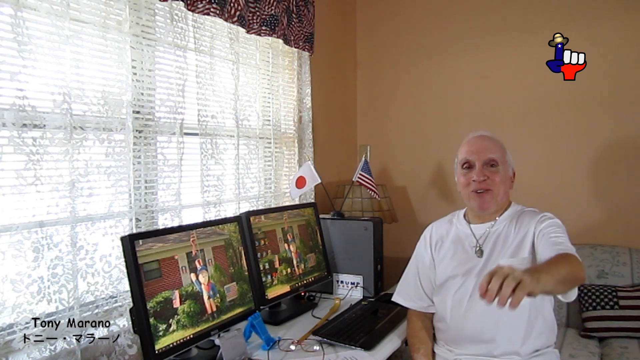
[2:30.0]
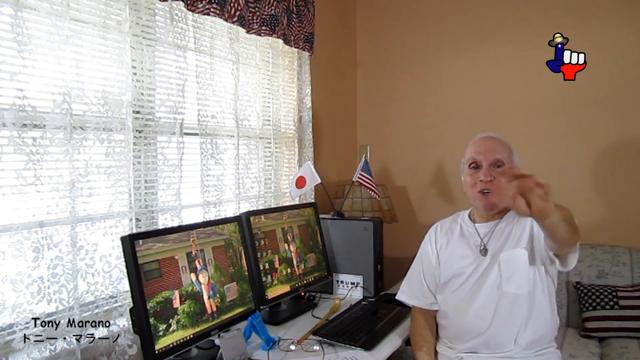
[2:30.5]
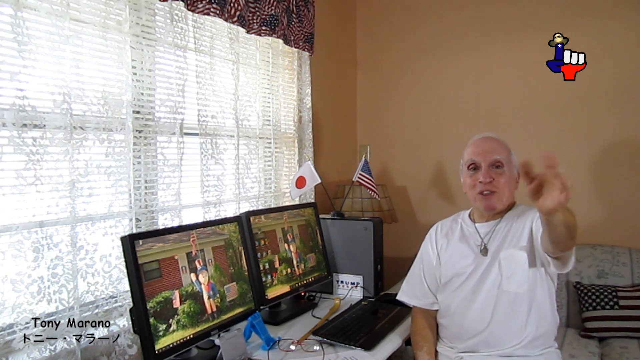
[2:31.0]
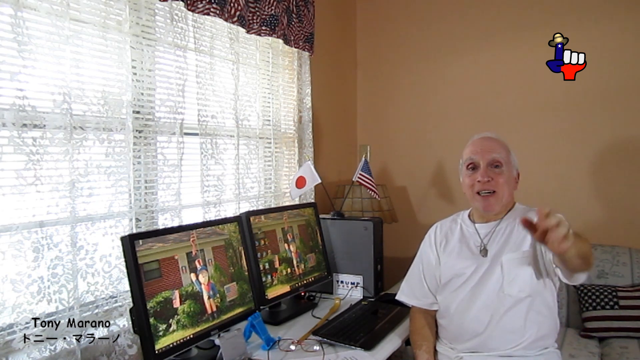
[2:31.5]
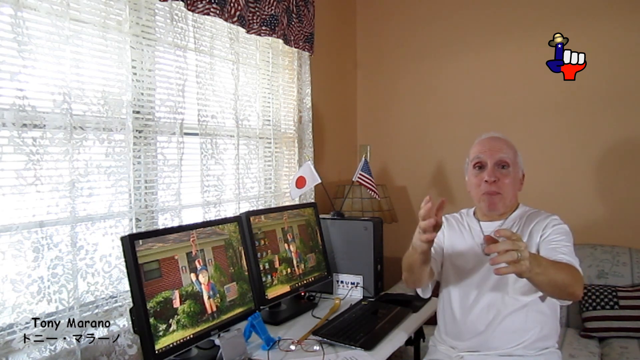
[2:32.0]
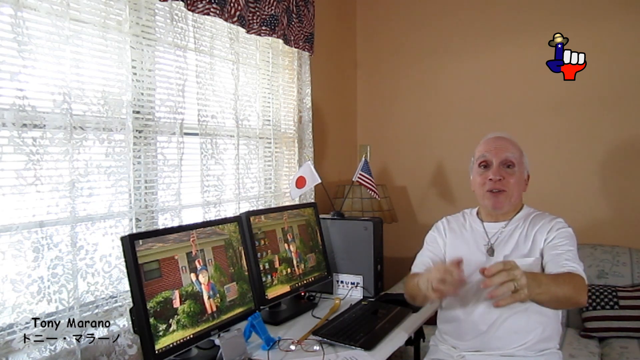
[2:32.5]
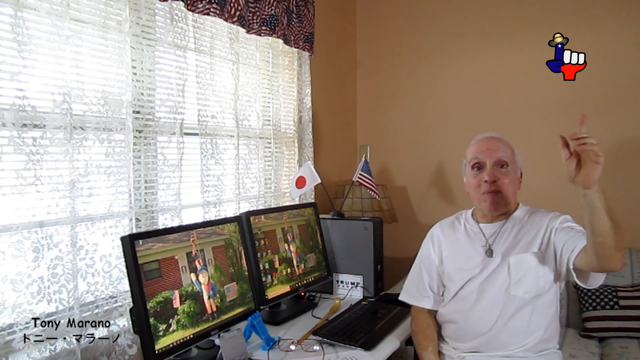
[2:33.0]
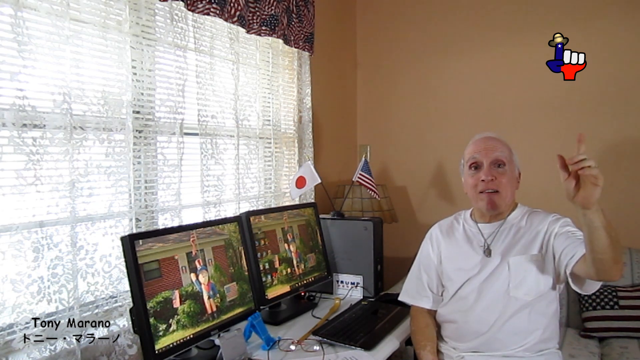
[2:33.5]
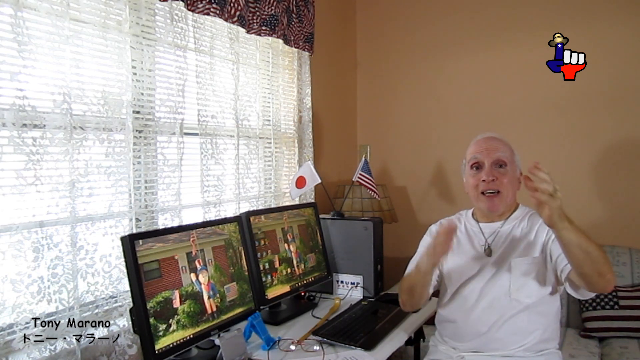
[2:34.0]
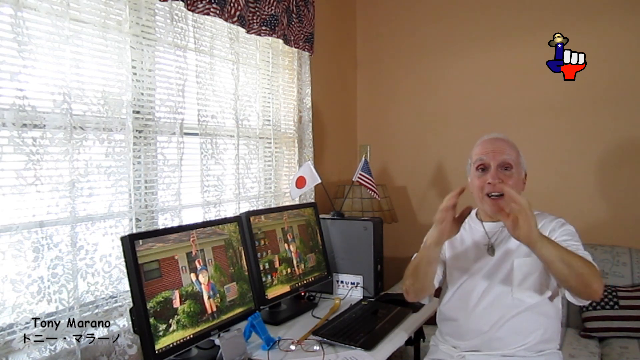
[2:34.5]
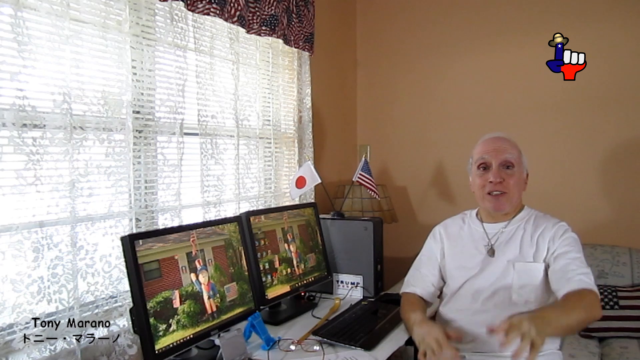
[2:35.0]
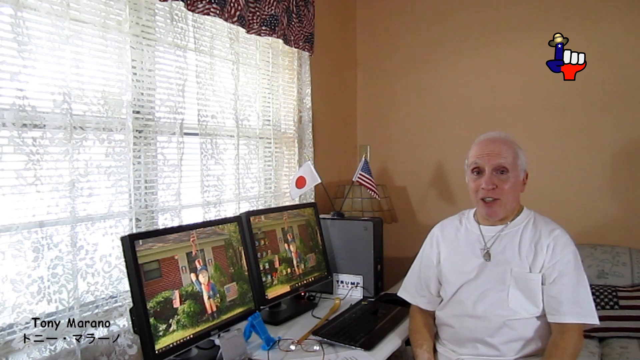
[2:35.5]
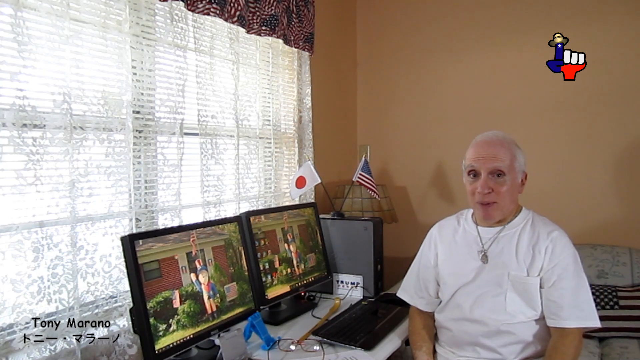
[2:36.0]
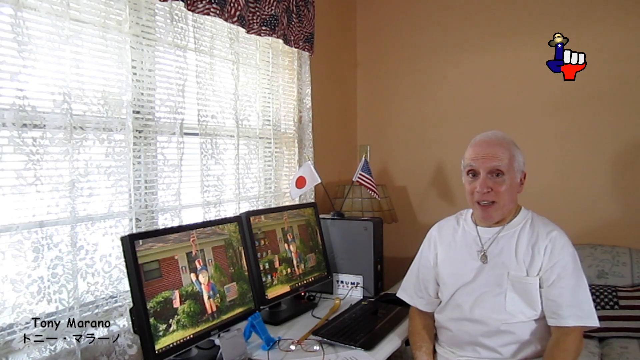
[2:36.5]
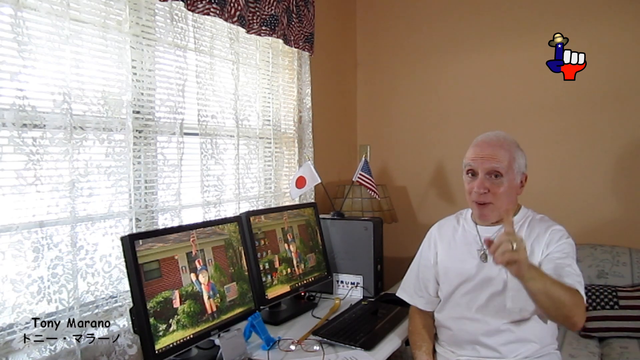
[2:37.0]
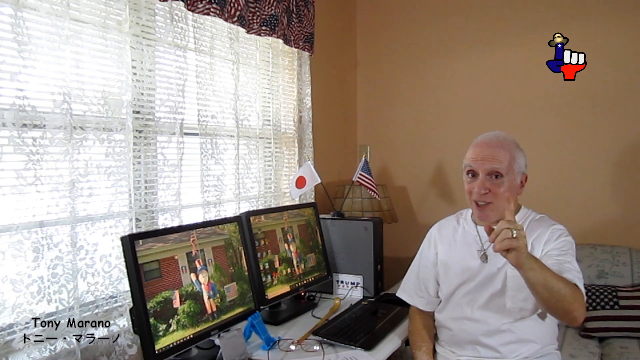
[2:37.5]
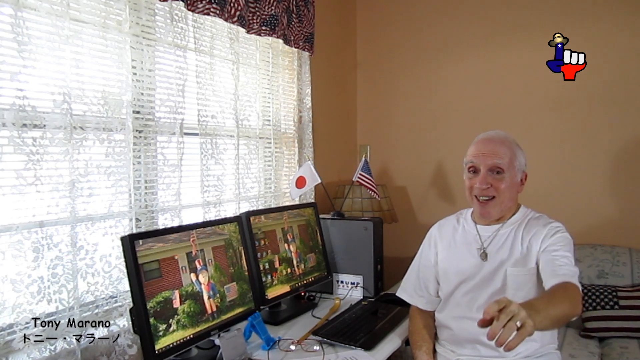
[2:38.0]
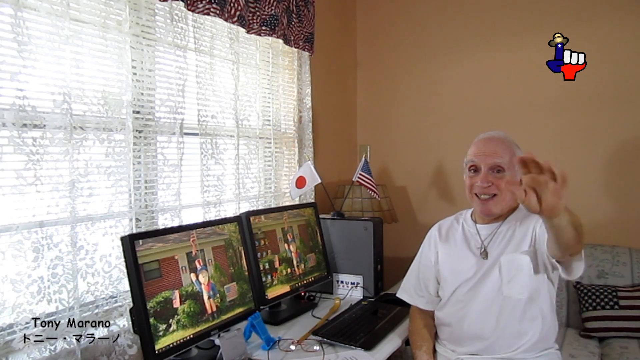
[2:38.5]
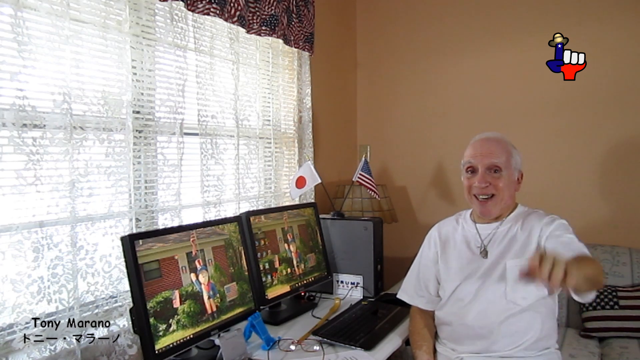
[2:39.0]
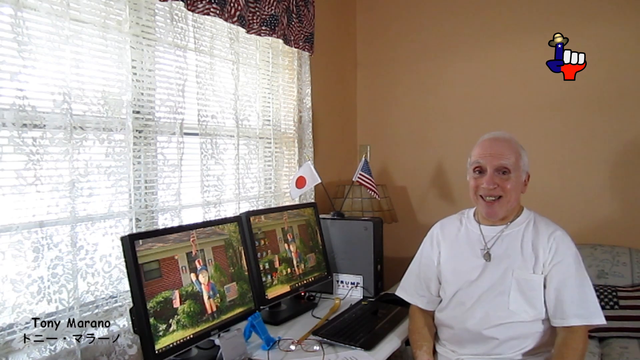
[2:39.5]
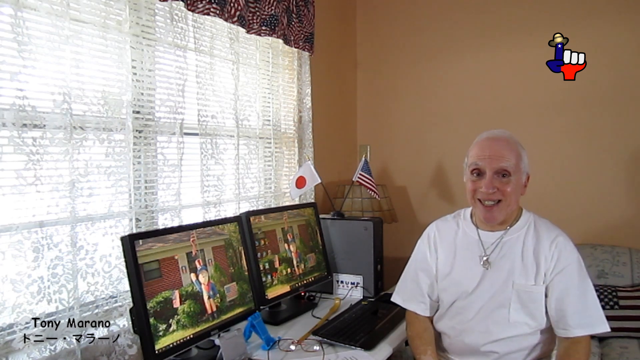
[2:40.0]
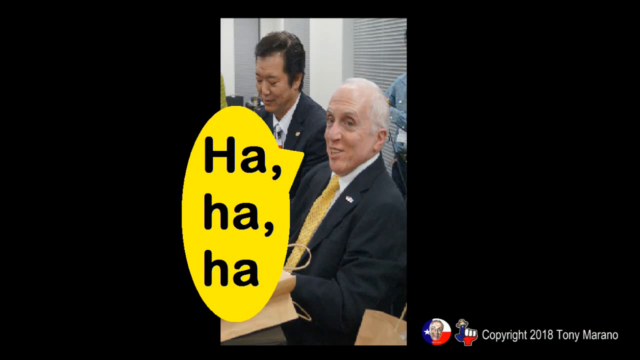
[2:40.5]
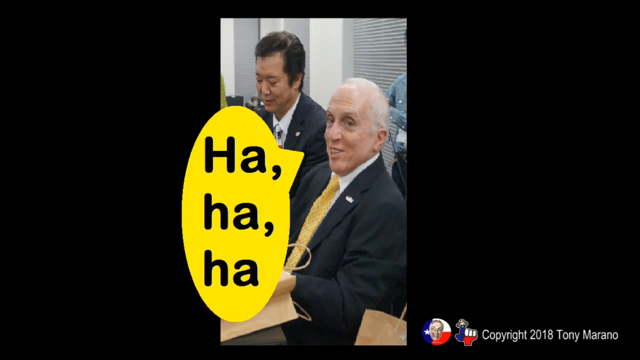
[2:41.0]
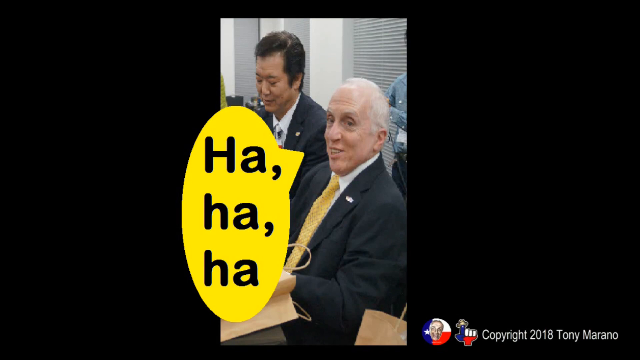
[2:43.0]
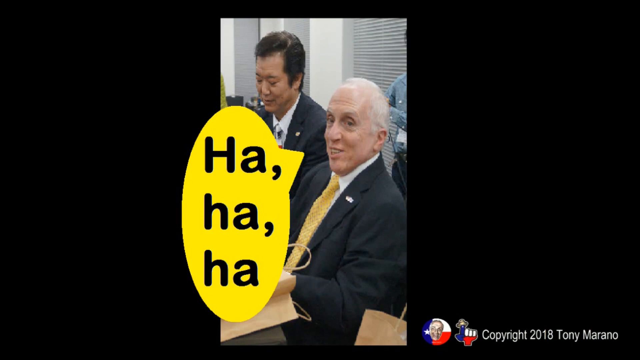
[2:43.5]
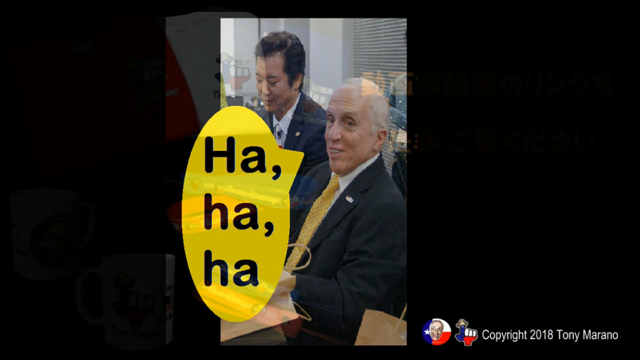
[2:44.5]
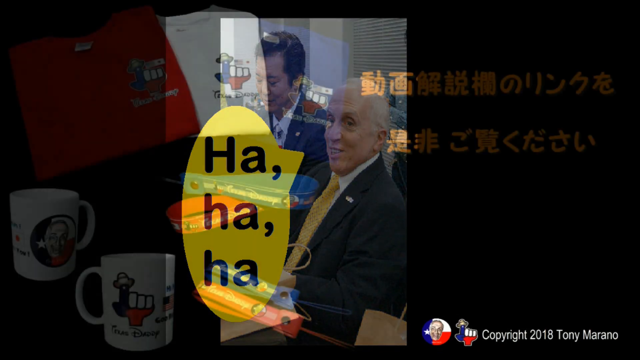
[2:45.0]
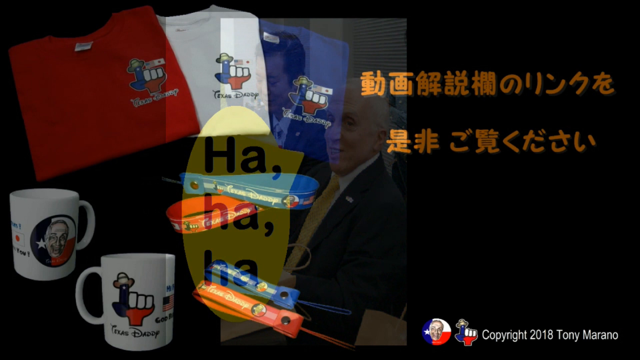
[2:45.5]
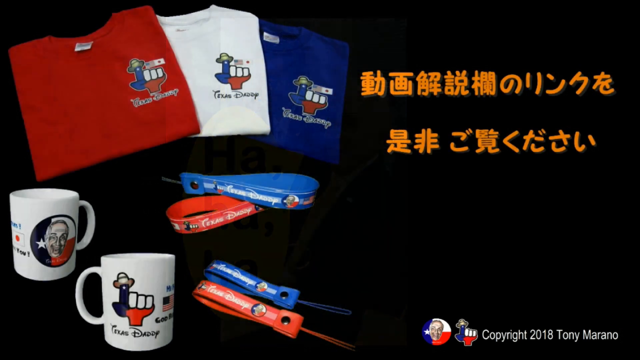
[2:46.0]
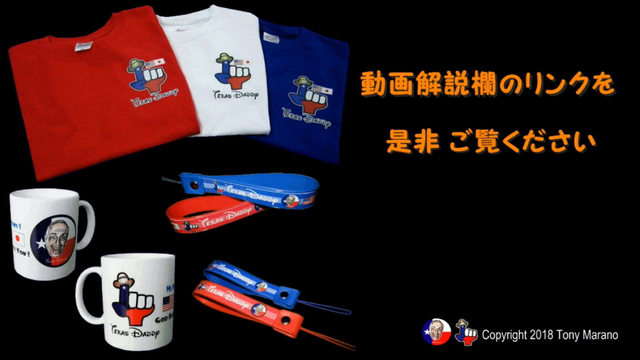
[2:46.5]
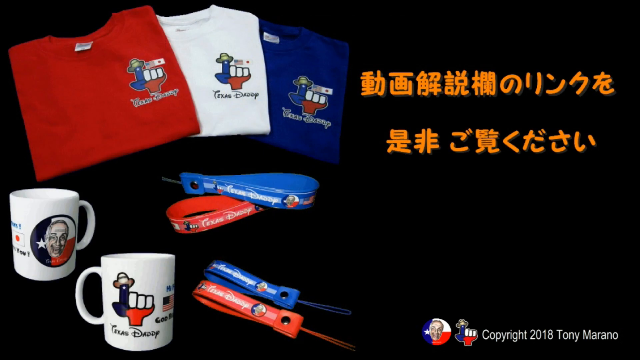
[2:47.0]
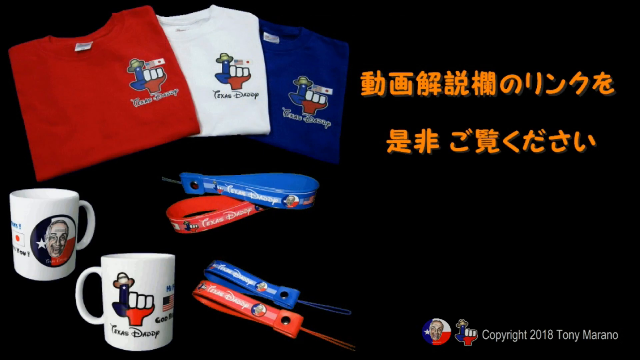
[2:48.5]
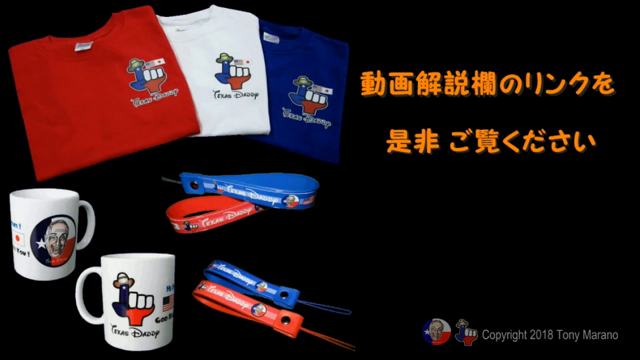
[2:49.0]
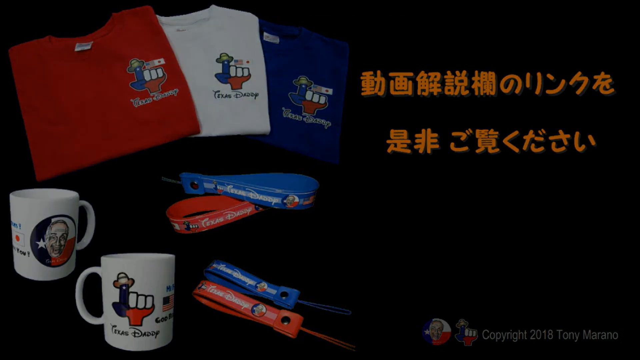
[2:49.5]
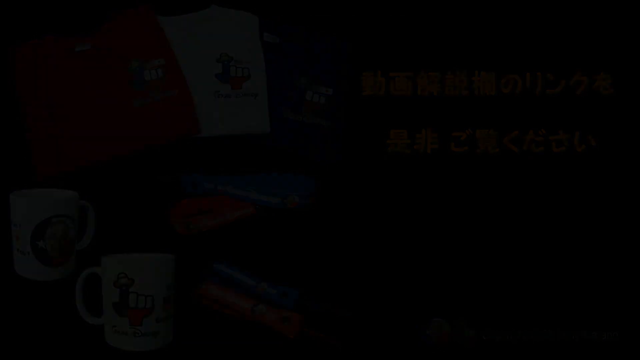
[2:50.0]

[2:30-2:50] A man sits on the right side of the screen, facing the camera and speaking directly into it. He has short white hair and wears a short-sleeved white shirt, with a necklace whose charm hangs on the outside of the shirt. To his right is a white desk with two desktop monitors side by side and a keyboard in front of one of them. Beside both, to the right, is the computer tower with two small flags on top, an American flag and a China flag. Behind the desk is a large window with a see-through white curtain, through which a blind can be seen going from the top of the window all the way to the bottom. In the bottom left-hand corner, black text reads "Tony Marano." The screen then changes to show a bald man in a black suit, white shirt, and yellow tie. In front of him is a large yellow circle with "Ha ha ha" written inside it in black.